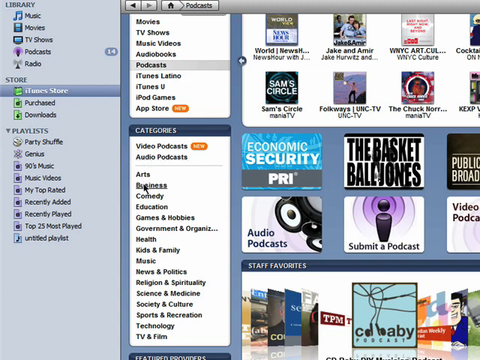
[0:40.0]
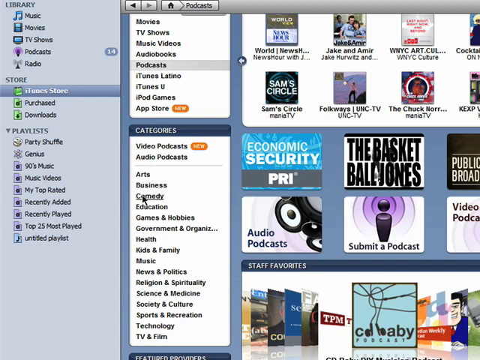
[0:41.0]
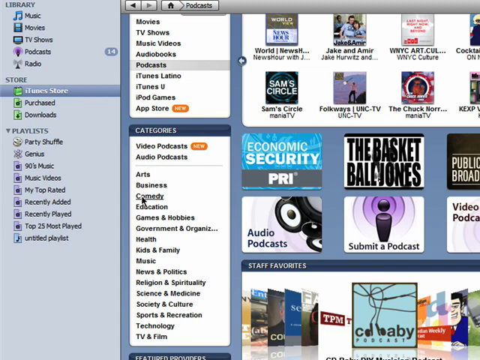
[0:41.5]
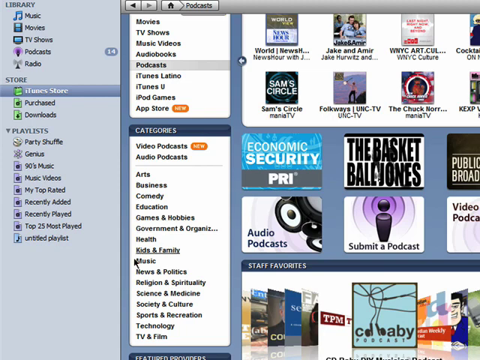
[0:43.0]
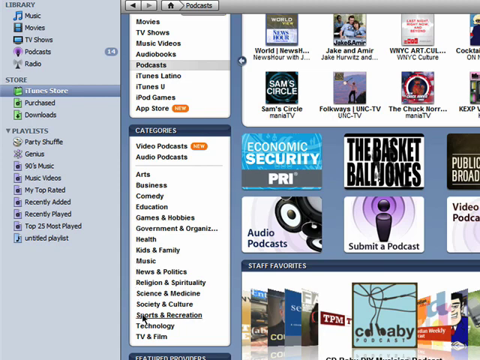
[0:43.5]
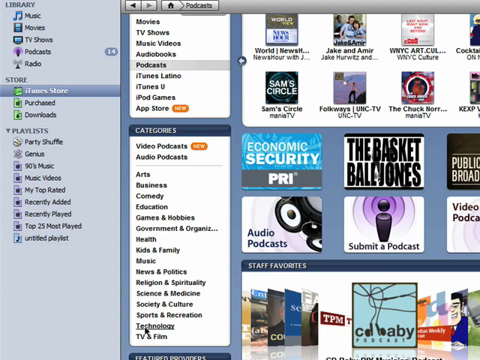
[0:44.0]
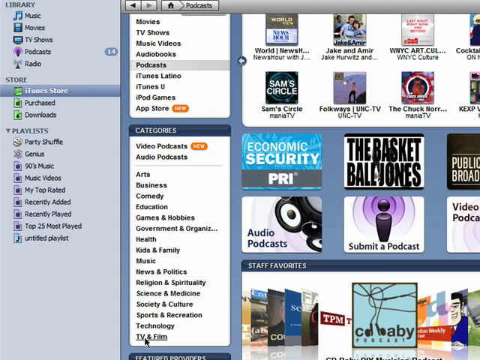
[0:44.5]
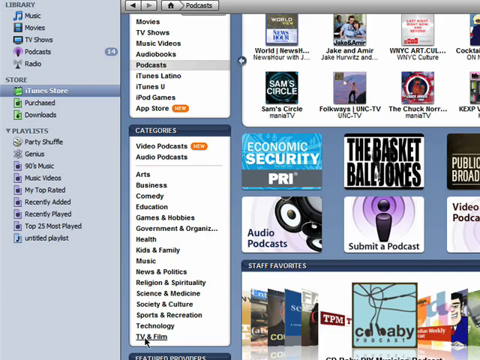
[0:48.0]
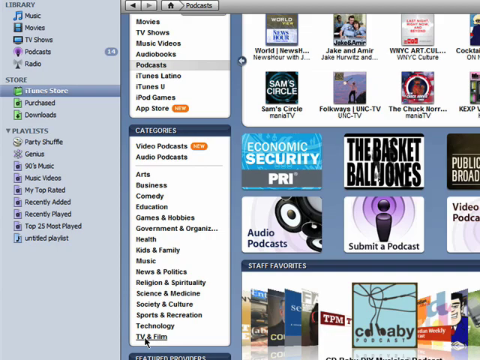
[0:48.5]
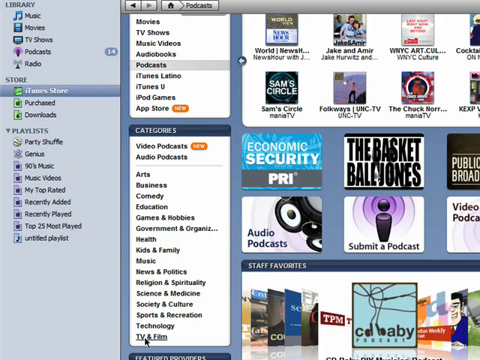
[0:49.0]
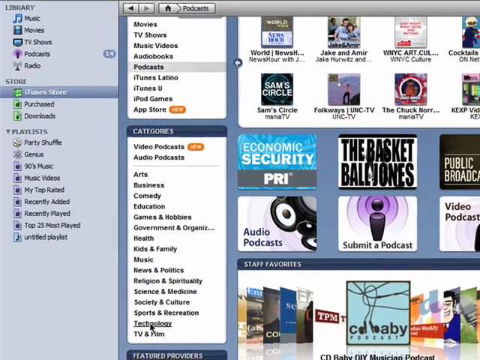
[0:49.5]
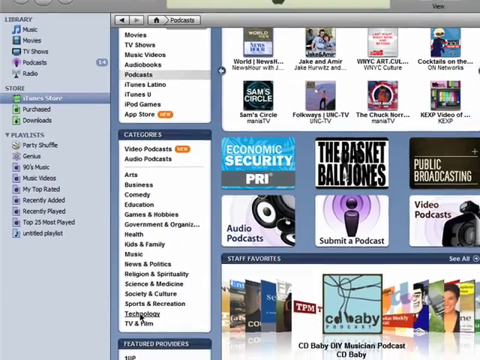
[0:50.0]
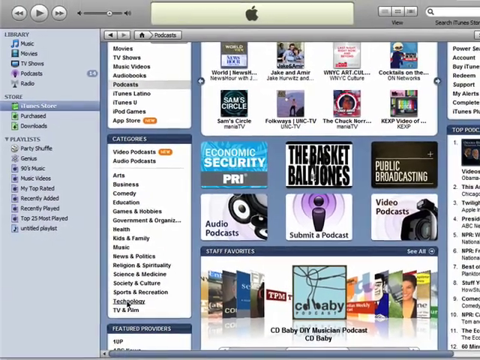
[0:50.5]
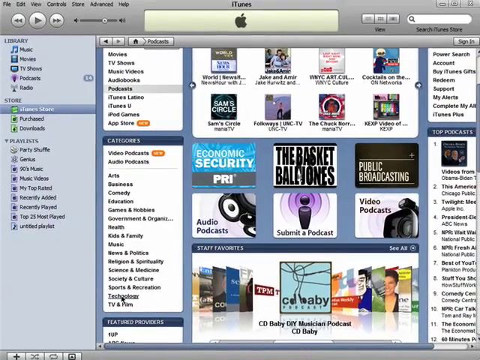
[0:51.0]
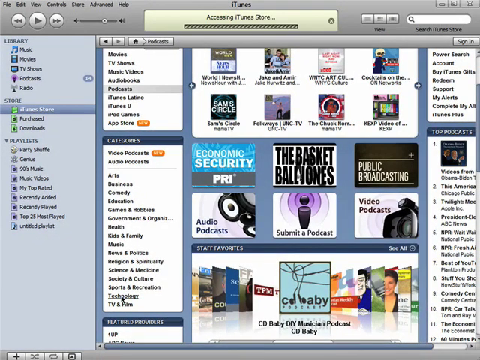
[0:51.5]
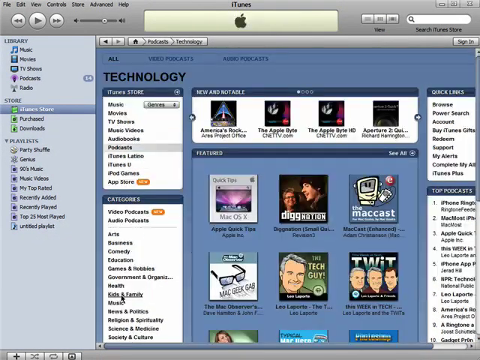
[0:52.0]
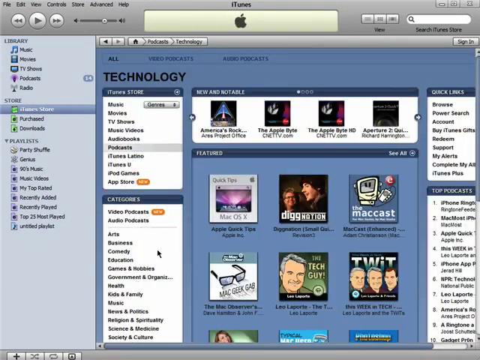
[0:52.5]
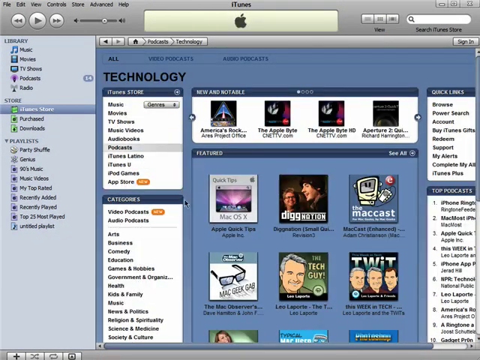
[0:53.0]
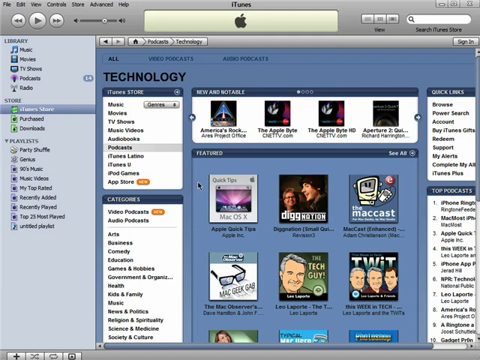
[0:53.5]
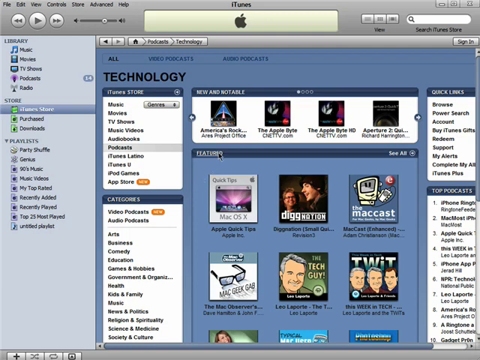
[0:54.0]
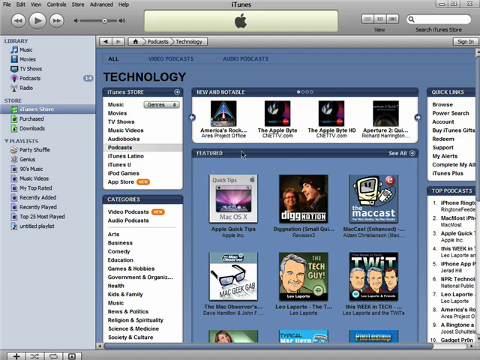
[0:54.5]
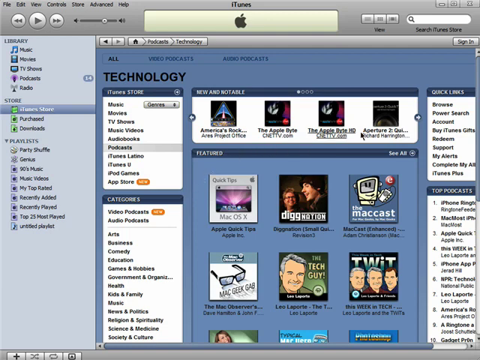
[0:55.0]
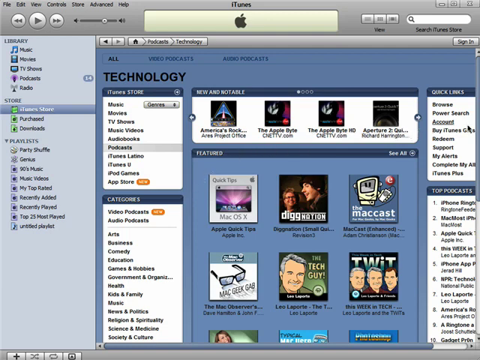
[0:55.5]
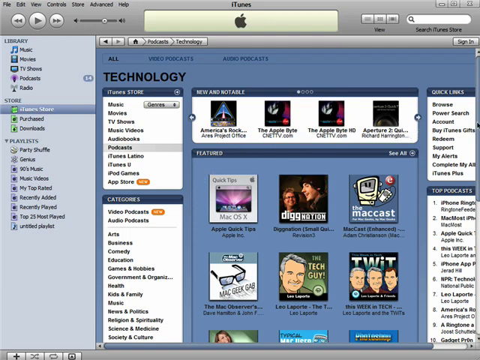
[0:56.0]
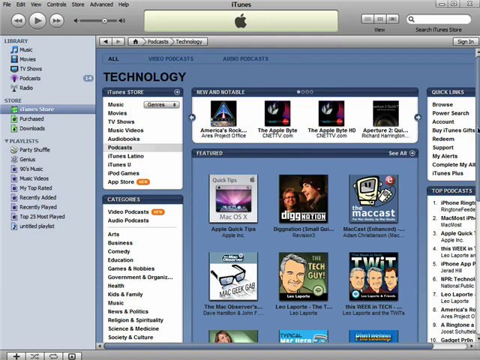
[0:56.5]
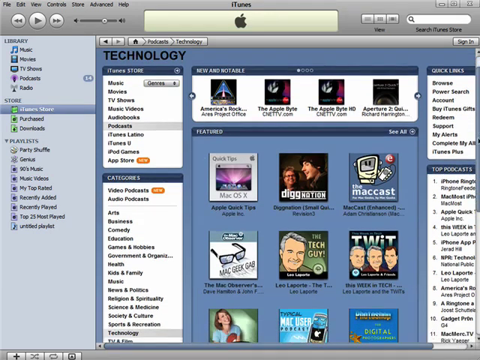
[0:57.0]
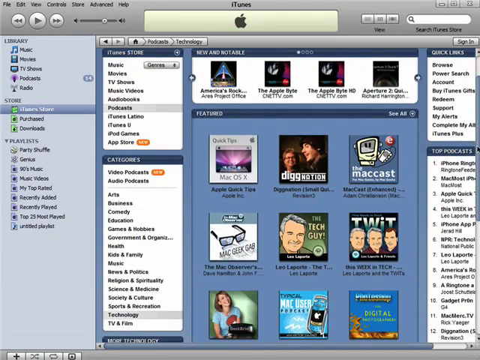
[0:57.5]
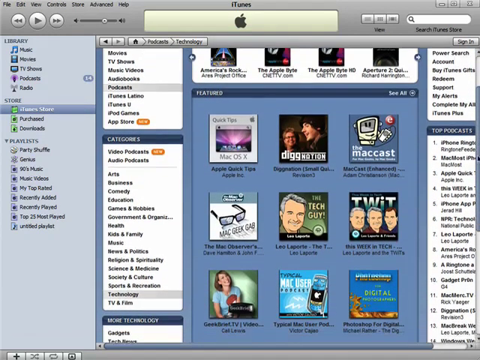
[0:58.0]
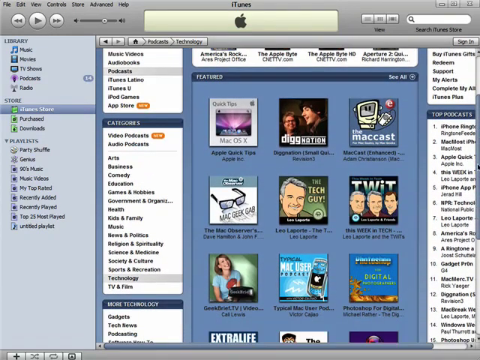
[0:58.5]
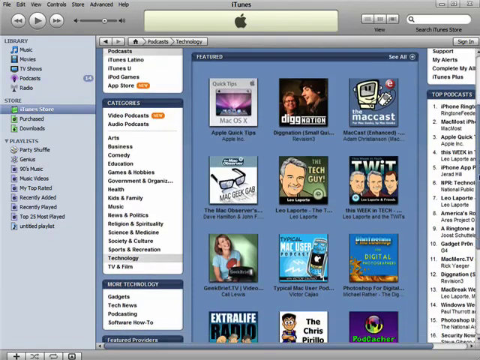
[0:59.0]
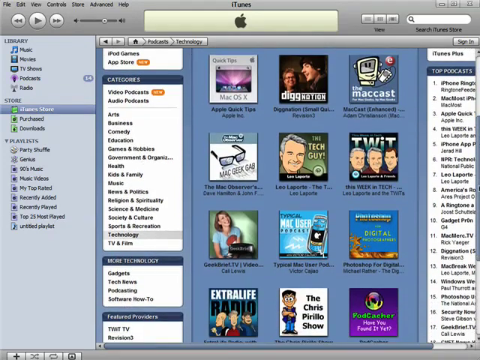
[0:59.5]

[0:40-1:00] The user continues scrolling through the iTunes home page, the cursor moving over several options. In the middle left are lists in two categories. The top list, in black and white, reads from top to bottom: movie, TV shows, music videos, audio books, podcasts, iTunes Latino, iTunes U, iPod games, and App Store. Below it is a section headed "categories" listing video podcasts, audio podcasts, arts, business, community, education, games and hobbies, apparently government and organizations, health, kids and family, music, news and politics, religion and spirituality, science and medicine, society and culture, sports, technology, and TV. The person seems to scroll around some more, and a different screen appears with a new and notable section and a featured section.